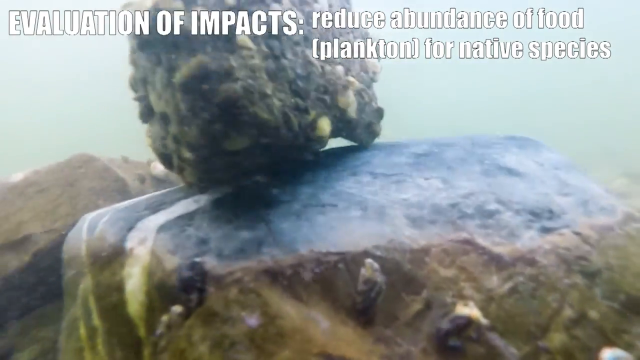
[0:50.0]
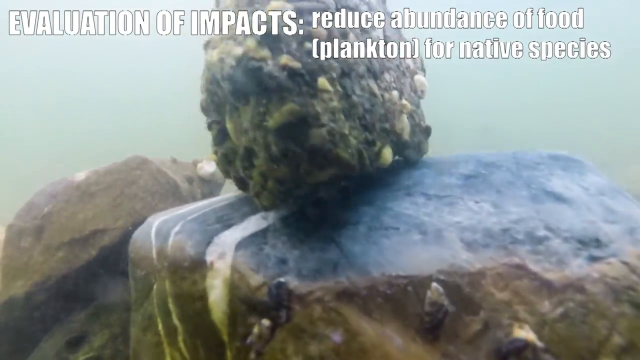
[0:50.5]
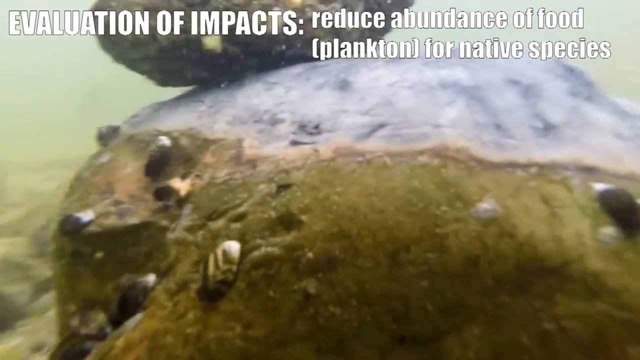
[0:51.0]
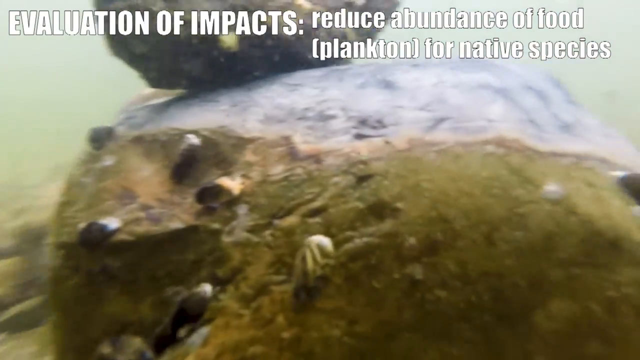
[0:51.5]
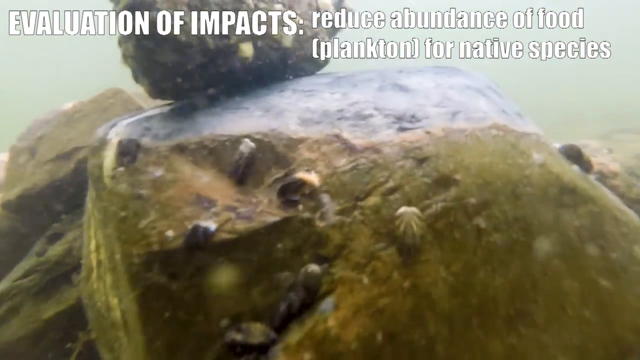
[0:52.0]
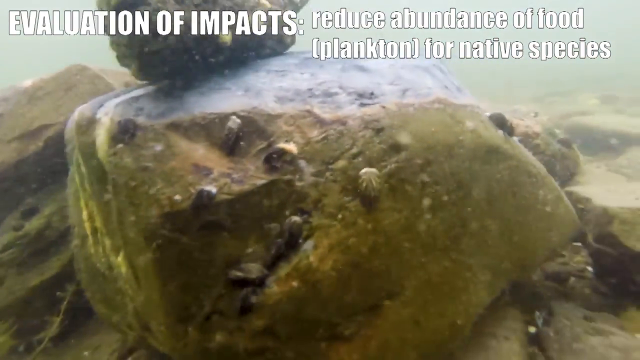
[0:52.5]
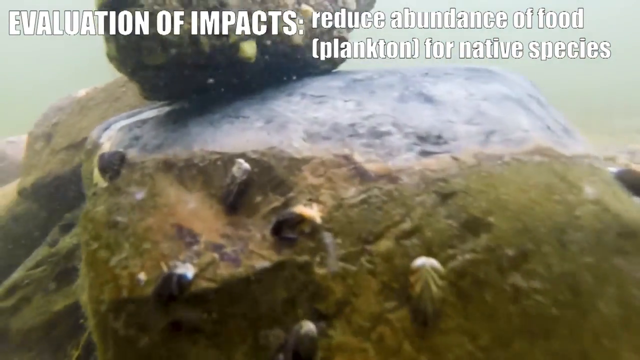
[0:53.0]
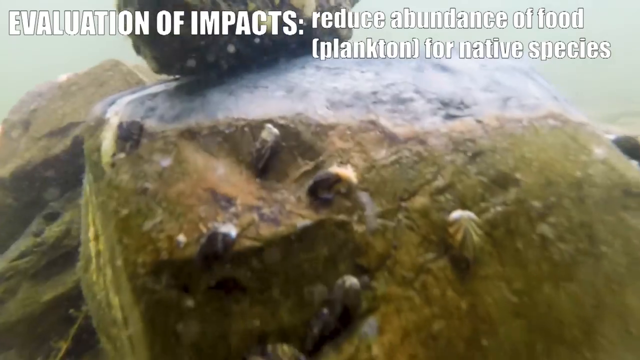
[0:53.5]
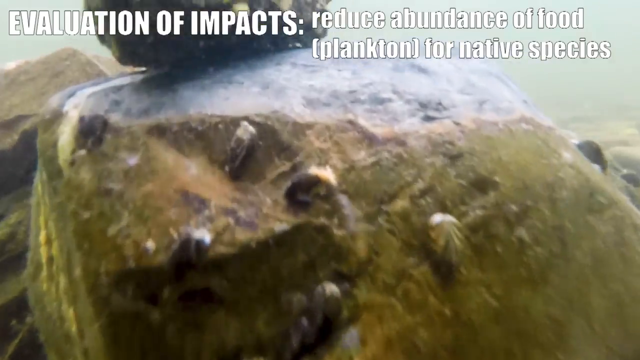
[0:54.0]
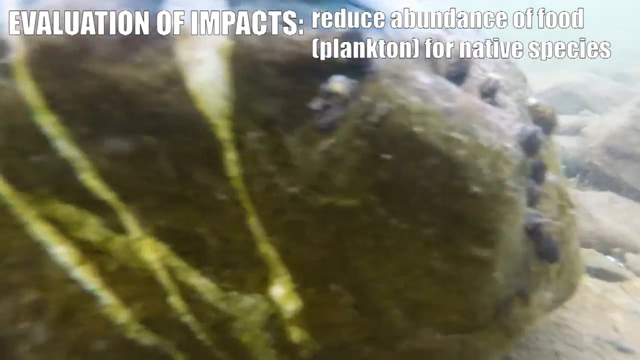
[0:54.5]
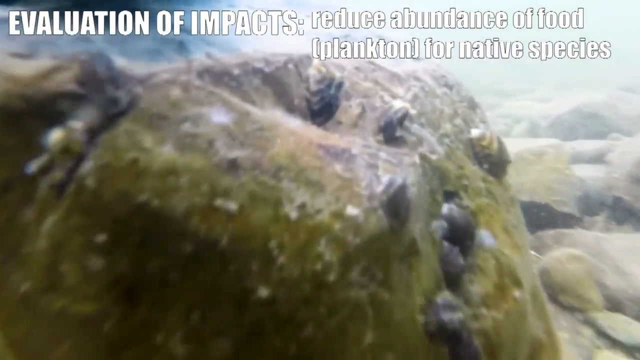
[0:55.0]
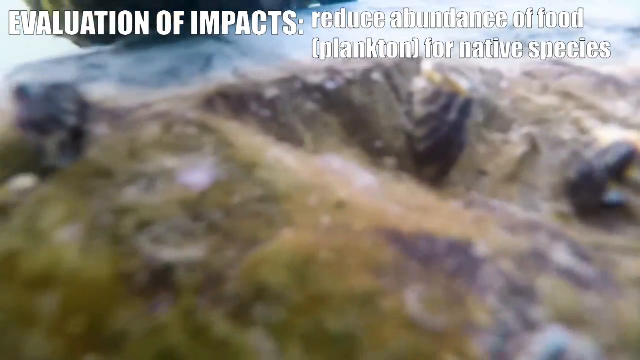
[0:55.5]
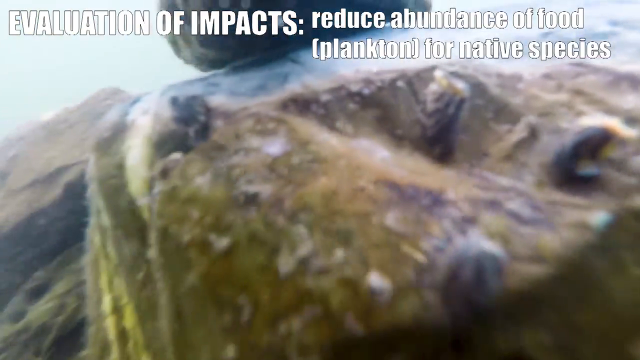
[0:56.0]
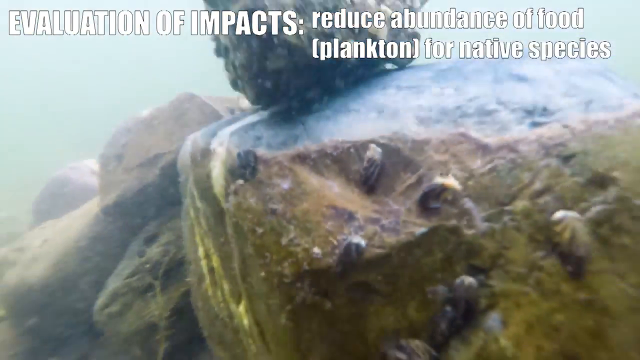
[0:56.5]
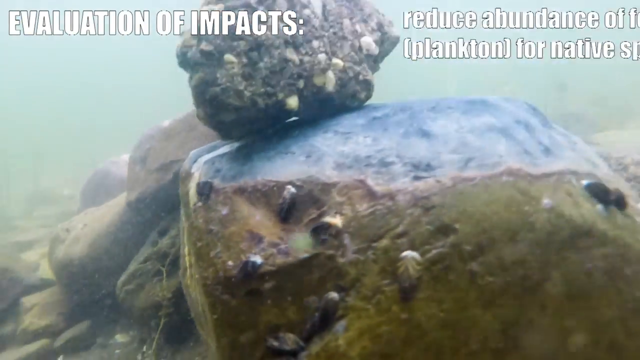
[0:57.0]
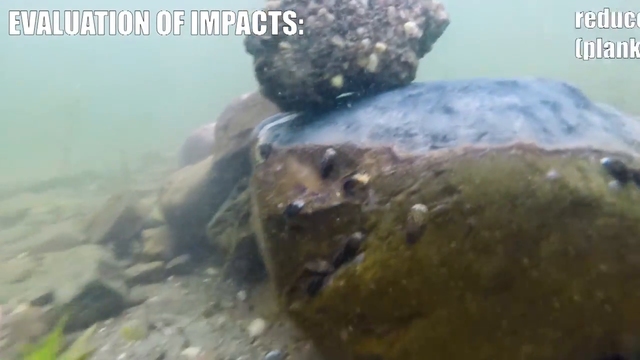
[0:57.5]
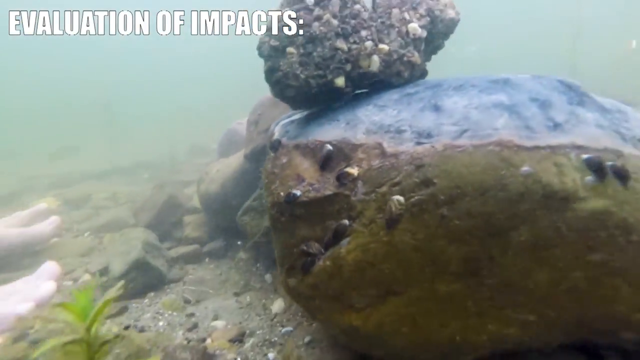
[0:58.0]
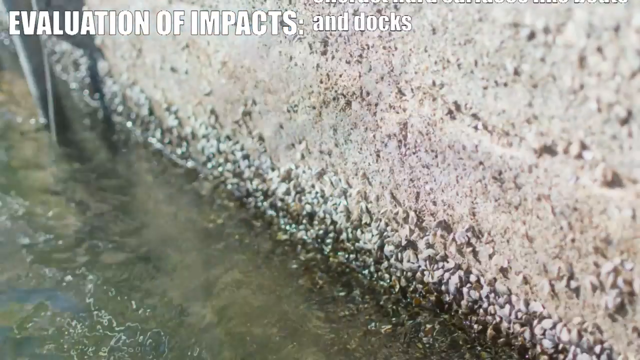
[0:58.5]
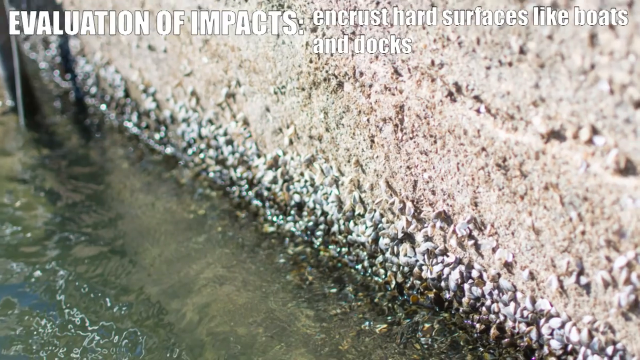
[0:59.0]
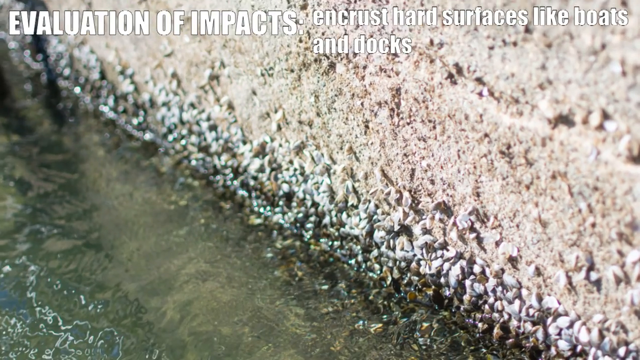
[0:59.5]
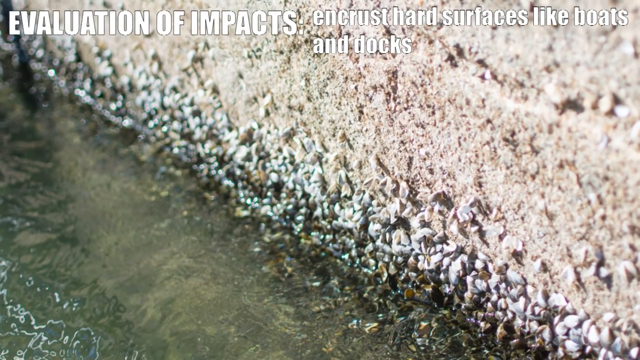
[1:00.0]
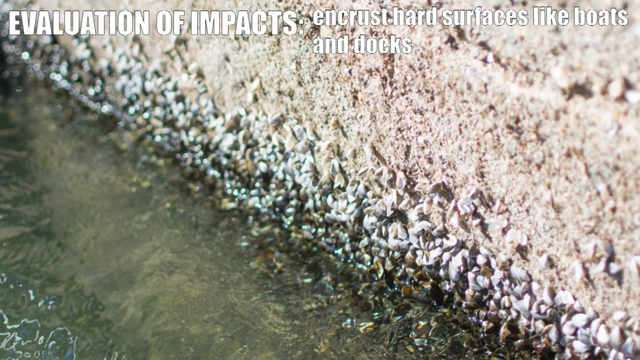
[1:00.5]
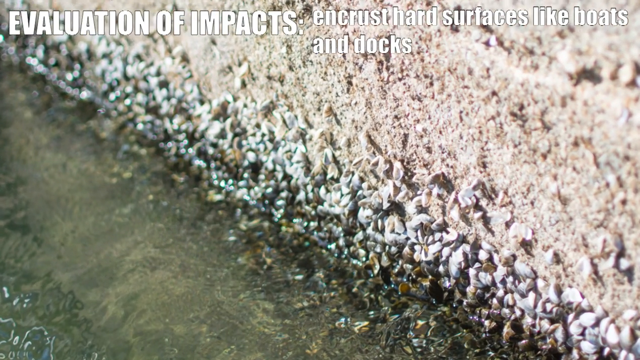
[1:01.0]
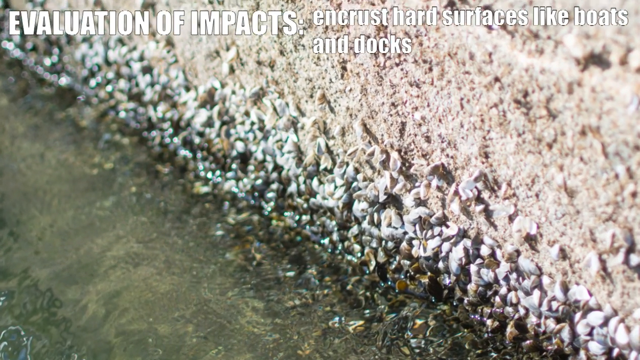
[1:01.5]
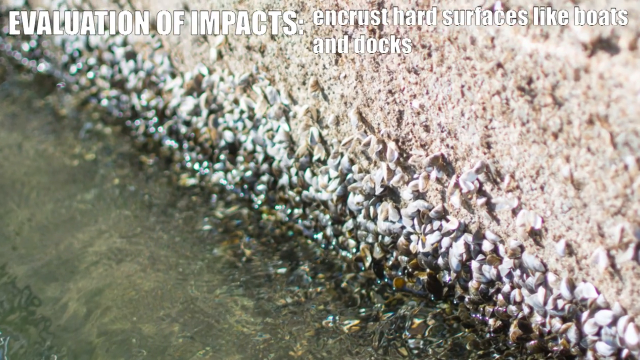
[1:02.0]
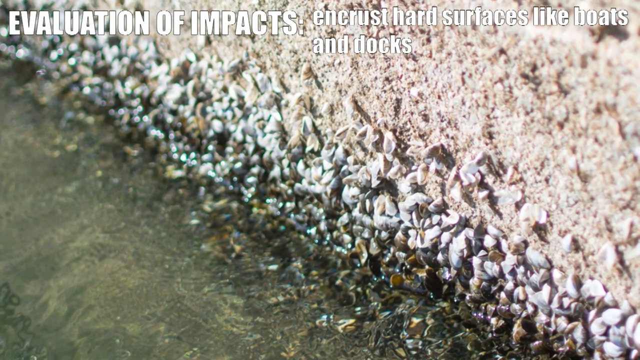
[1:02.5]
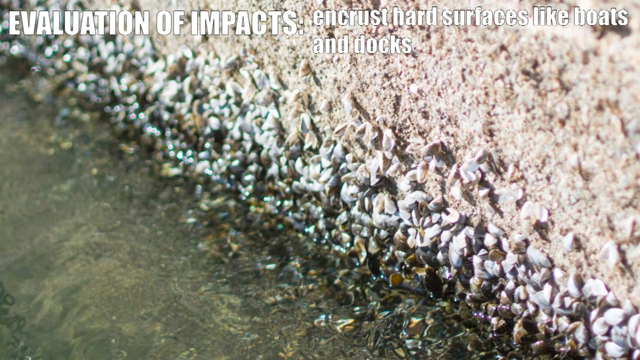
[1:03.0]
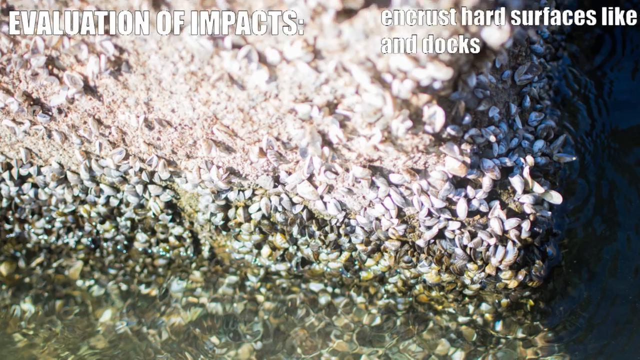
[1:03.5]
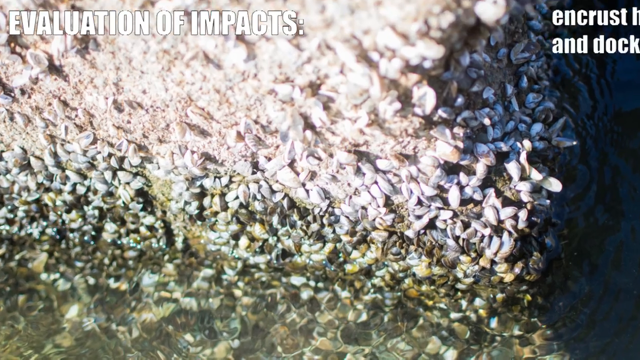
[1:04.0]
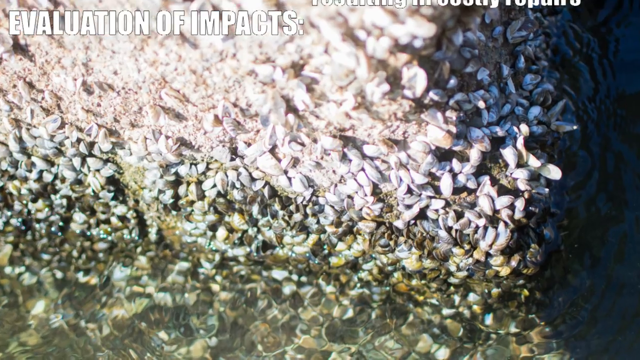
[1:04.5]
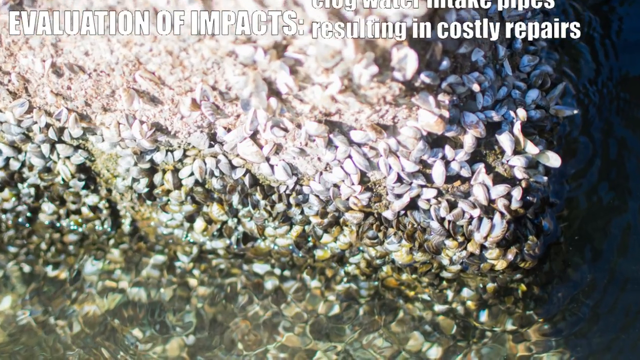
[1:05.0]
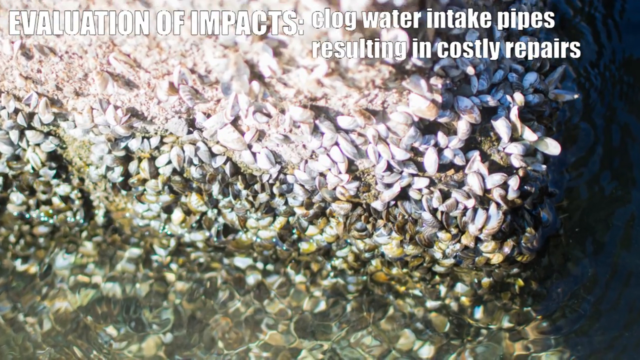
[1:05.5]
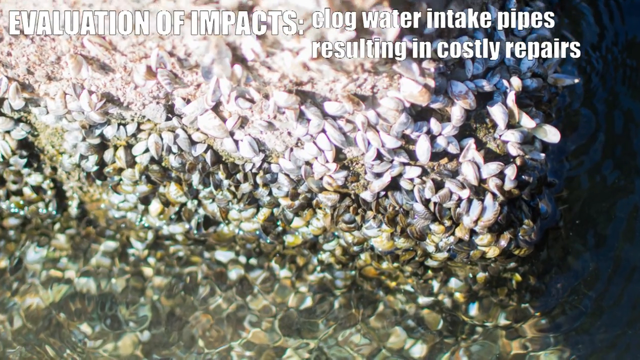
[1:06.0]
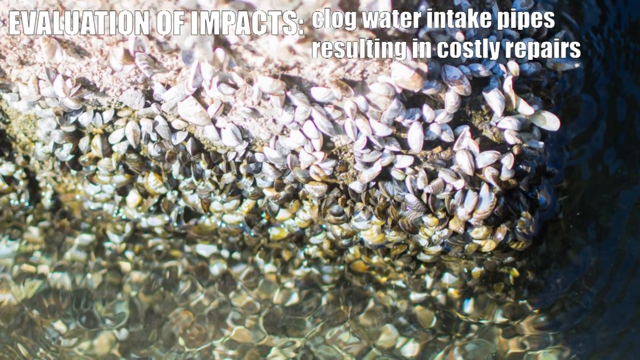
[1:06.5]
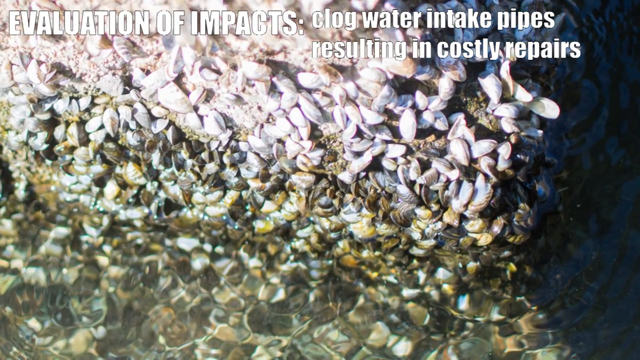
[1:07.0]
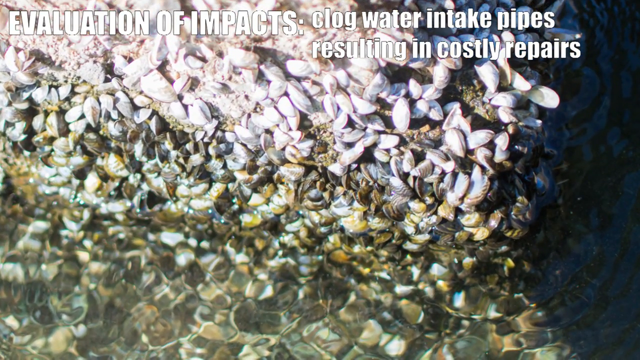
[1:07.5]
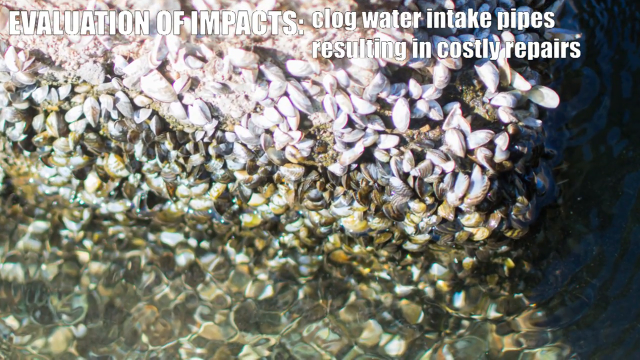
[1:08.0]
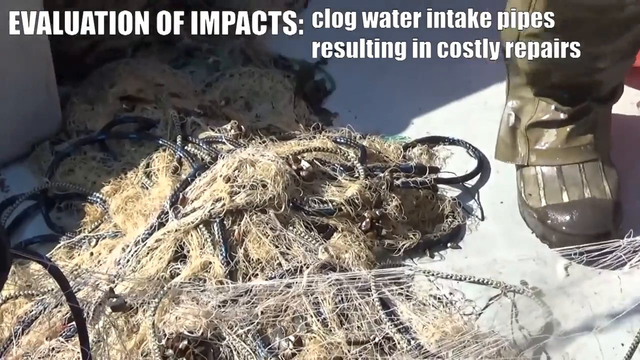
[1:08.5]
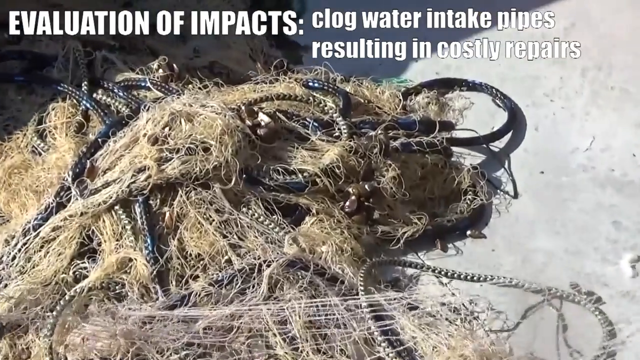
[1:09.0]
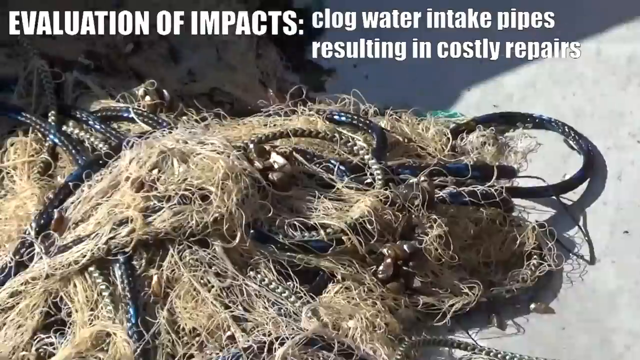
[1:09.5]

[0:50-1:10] The scene is underwater, showing what looks like some type of coral, though it looks more like a rock. As the camera moves closer, little zebra mussels that look like little oysters can be seen attached to the rock. White letters at the top read "evaluation of impacts," and the text notes that they reduce the abundance of food and plankton for the native species.